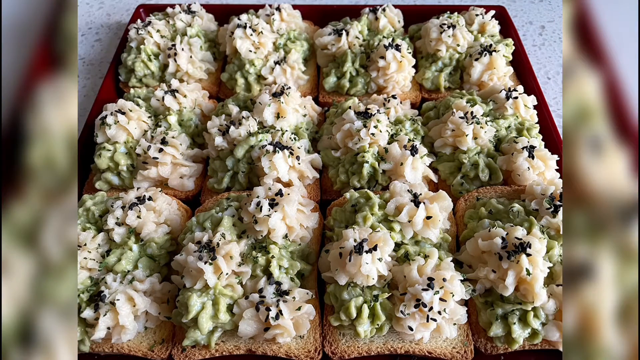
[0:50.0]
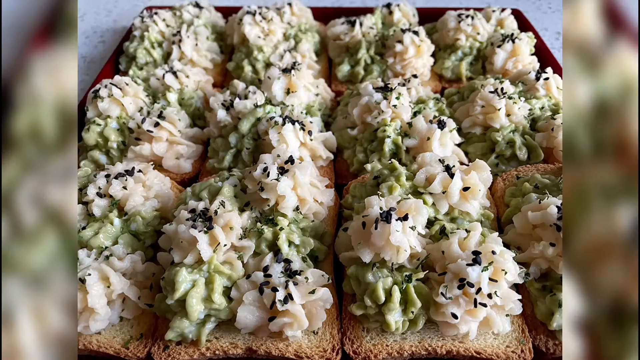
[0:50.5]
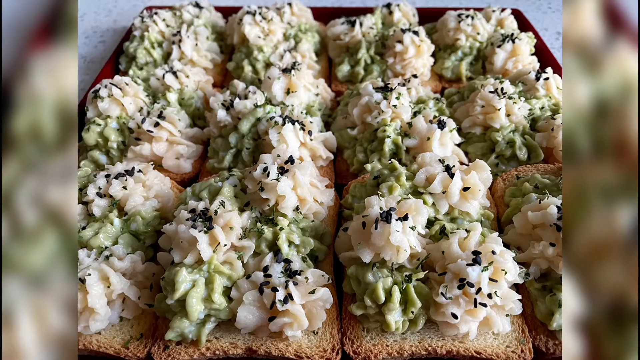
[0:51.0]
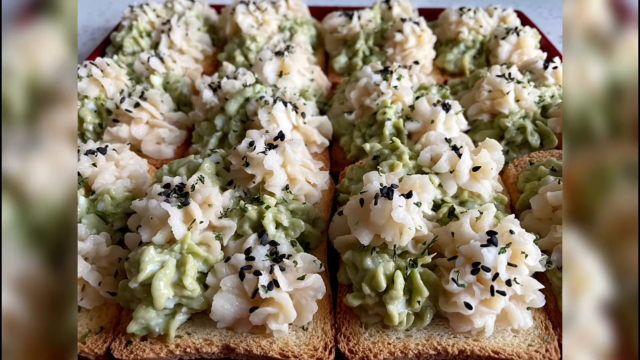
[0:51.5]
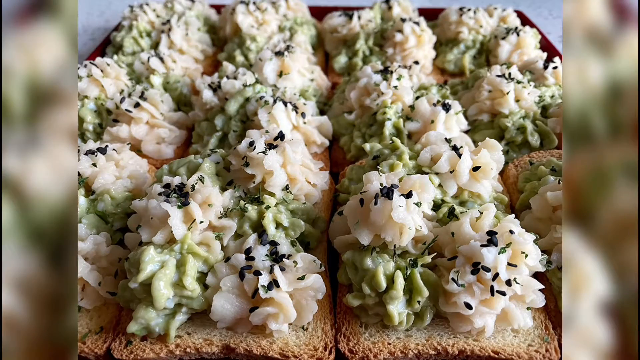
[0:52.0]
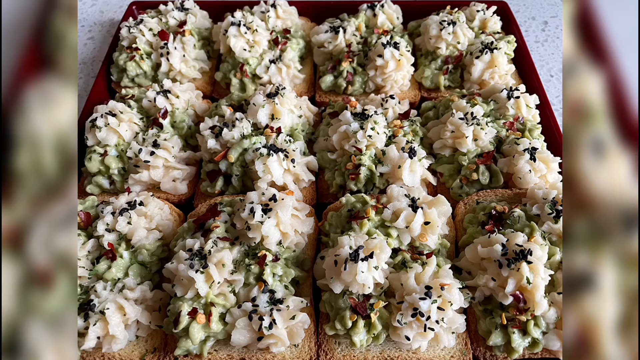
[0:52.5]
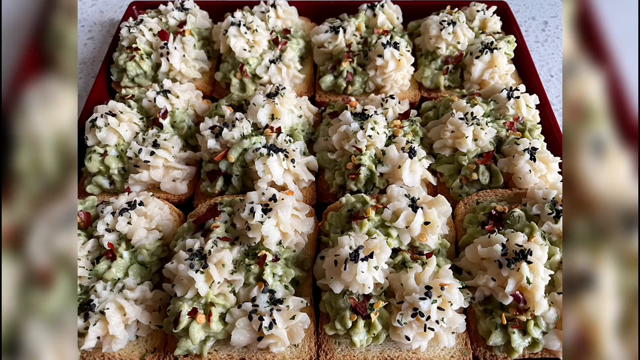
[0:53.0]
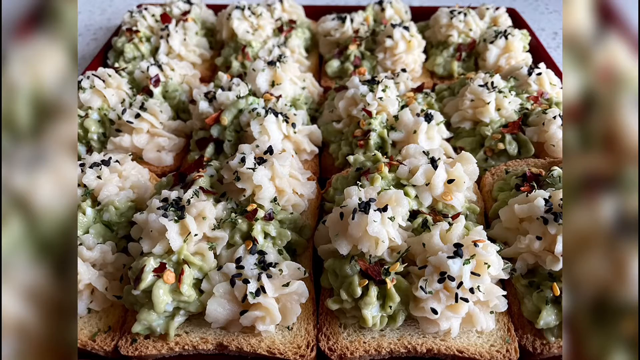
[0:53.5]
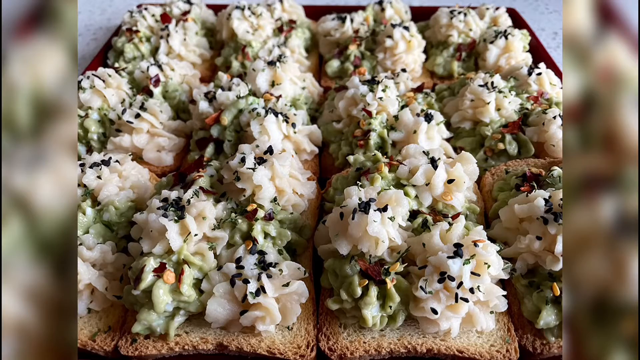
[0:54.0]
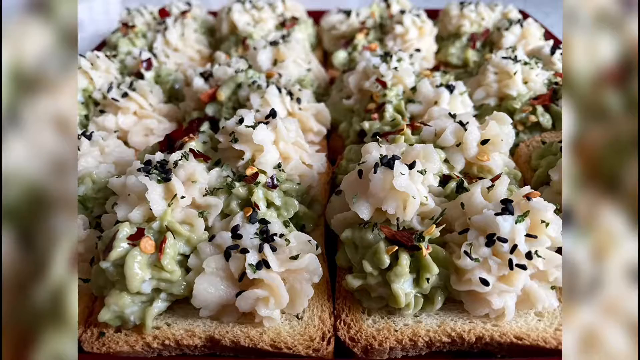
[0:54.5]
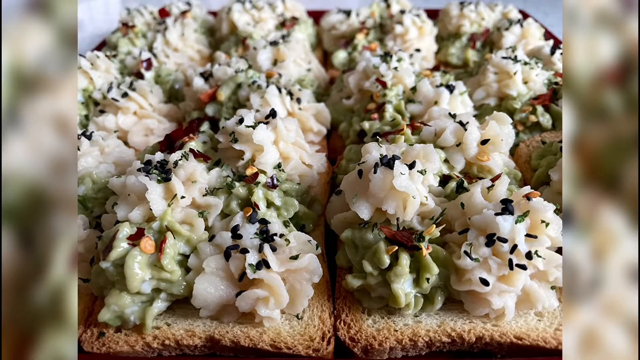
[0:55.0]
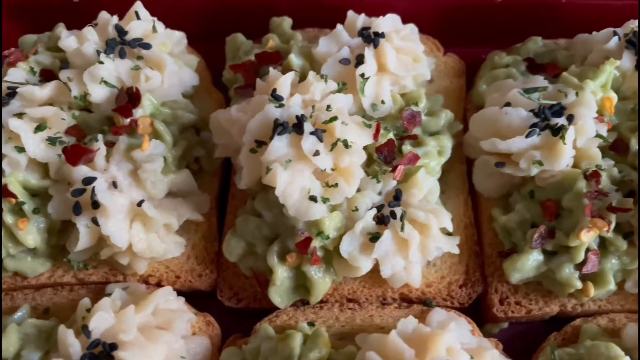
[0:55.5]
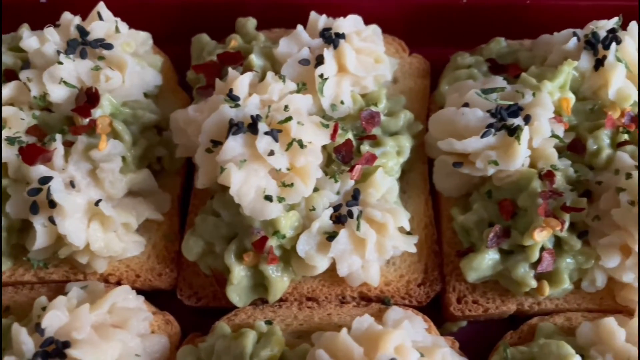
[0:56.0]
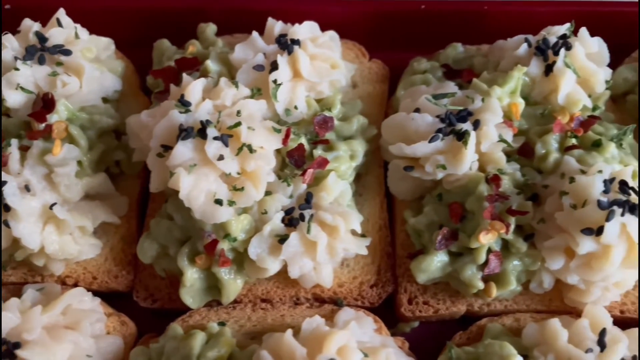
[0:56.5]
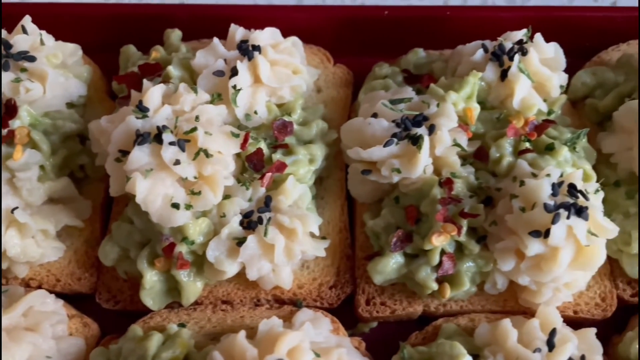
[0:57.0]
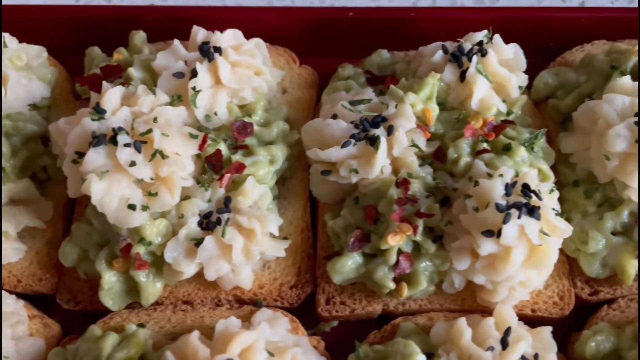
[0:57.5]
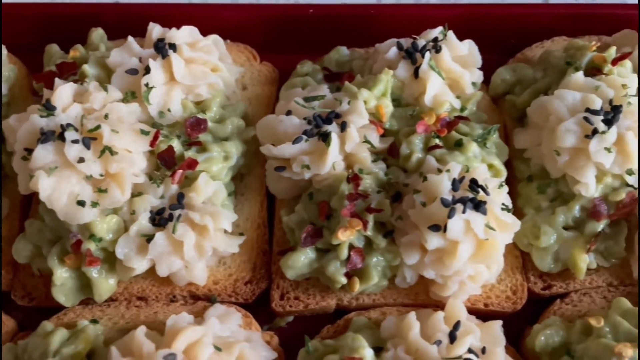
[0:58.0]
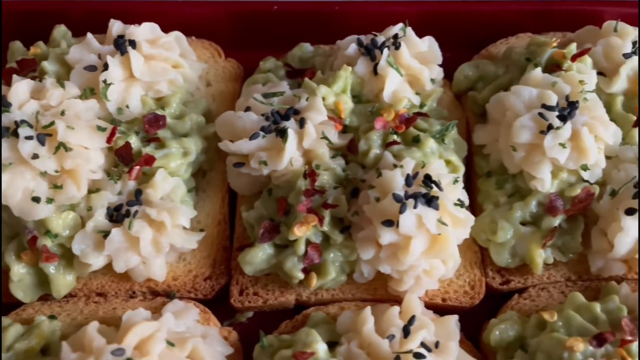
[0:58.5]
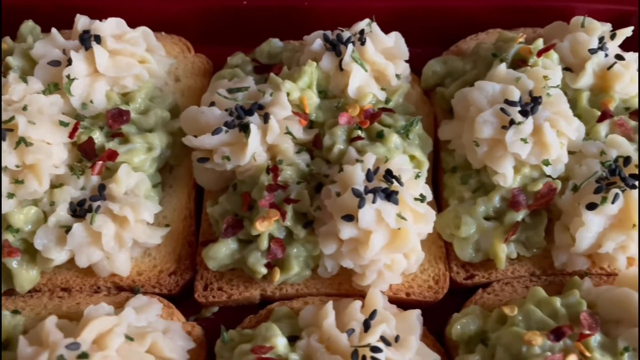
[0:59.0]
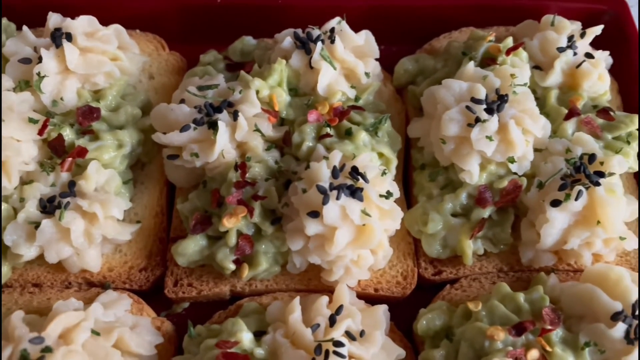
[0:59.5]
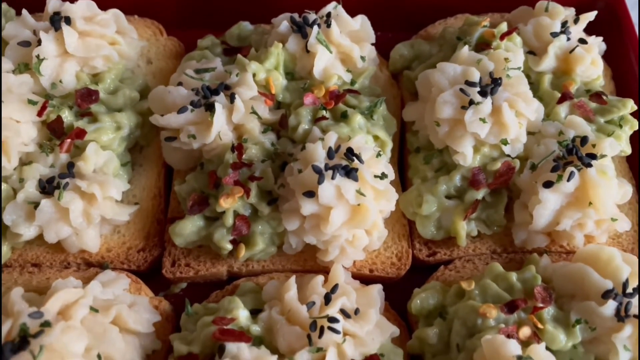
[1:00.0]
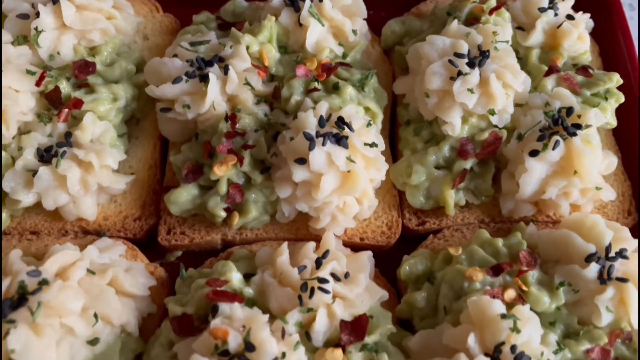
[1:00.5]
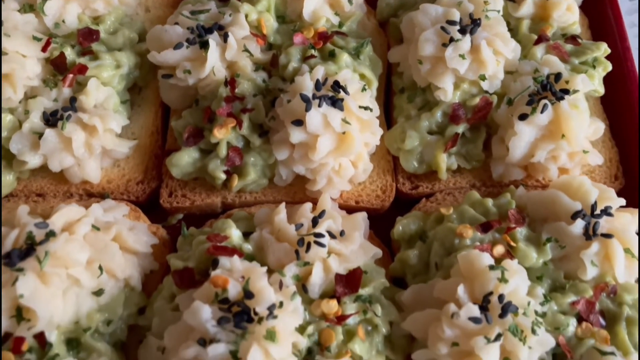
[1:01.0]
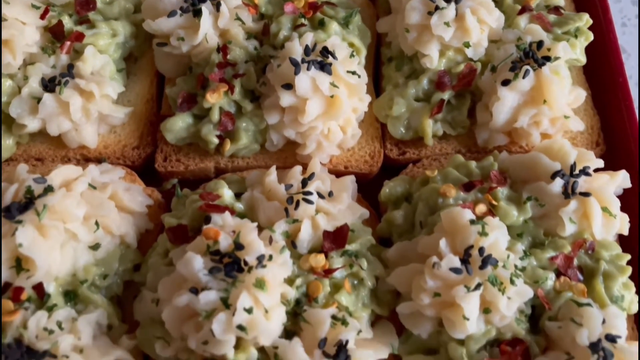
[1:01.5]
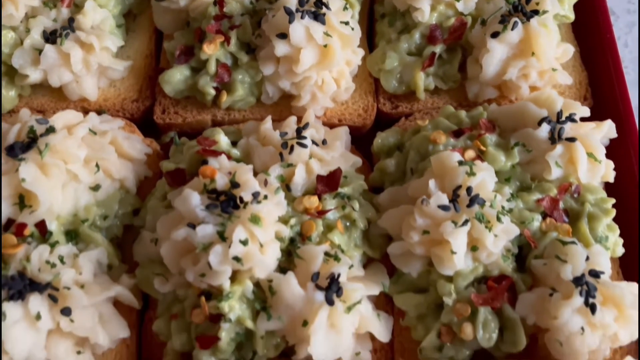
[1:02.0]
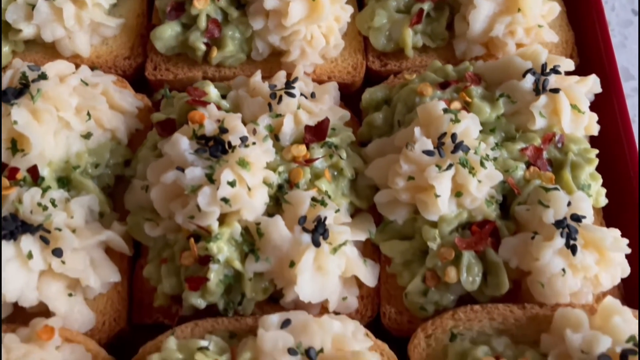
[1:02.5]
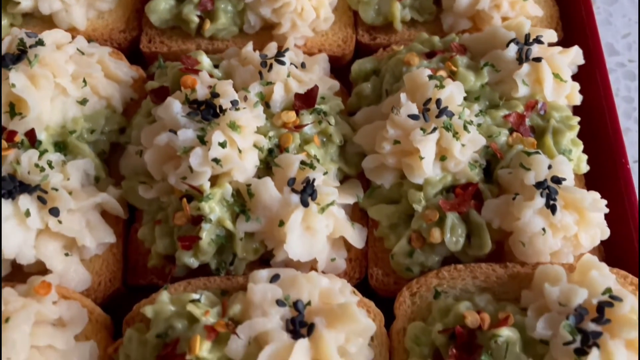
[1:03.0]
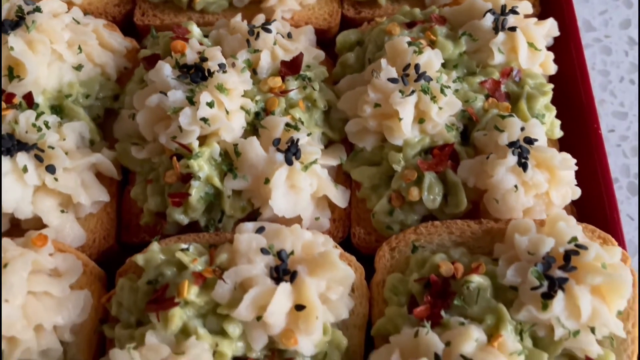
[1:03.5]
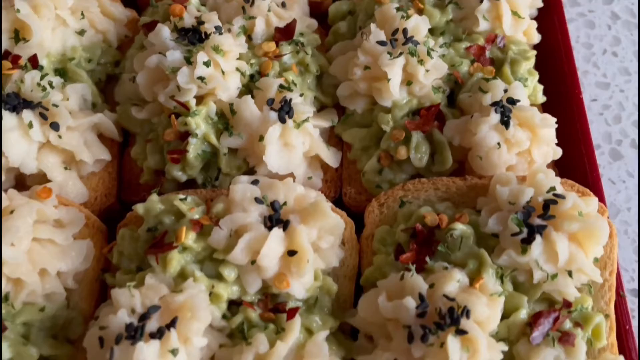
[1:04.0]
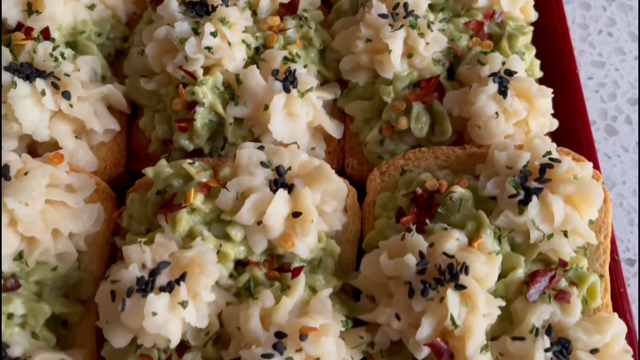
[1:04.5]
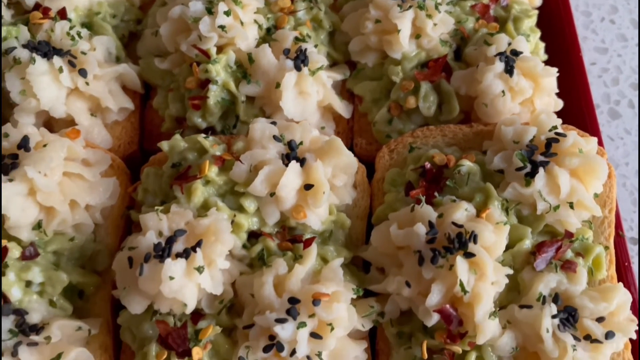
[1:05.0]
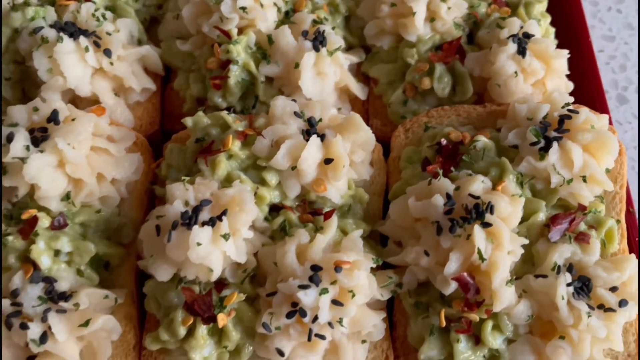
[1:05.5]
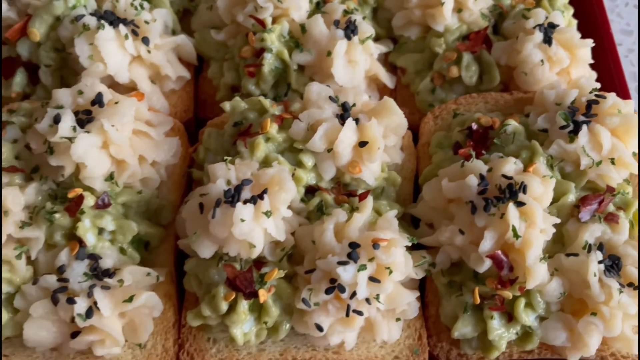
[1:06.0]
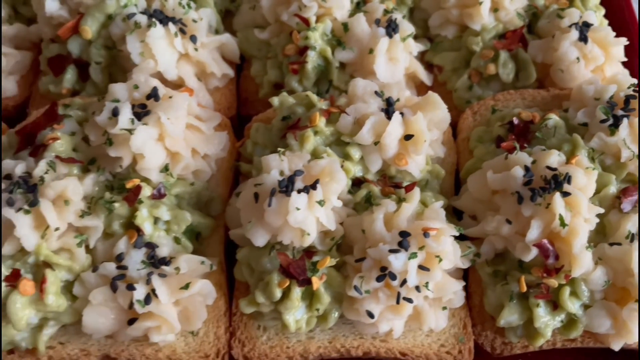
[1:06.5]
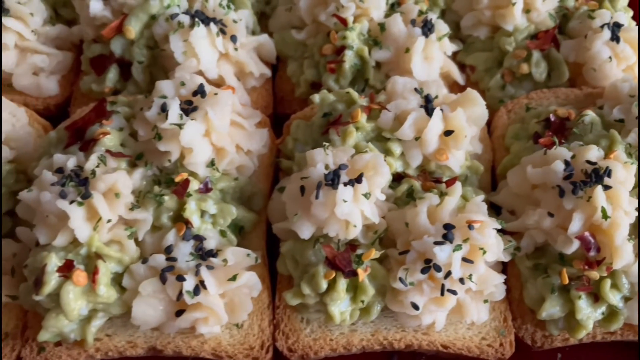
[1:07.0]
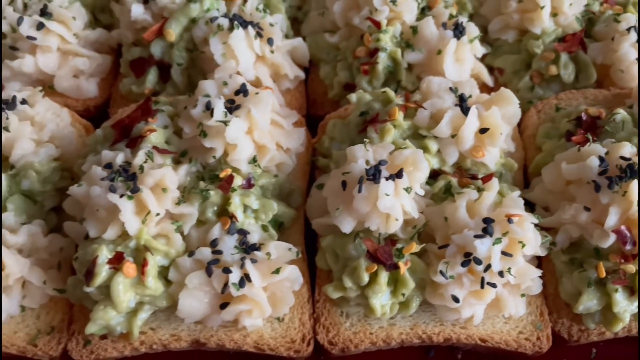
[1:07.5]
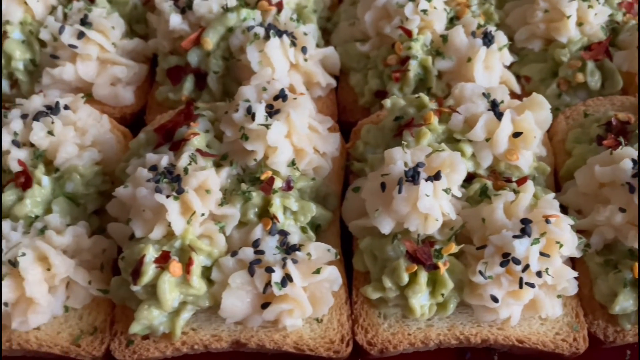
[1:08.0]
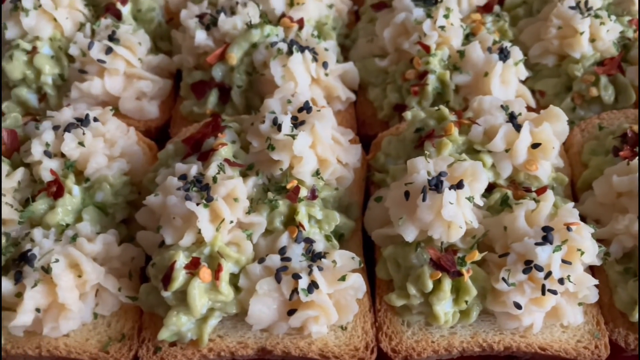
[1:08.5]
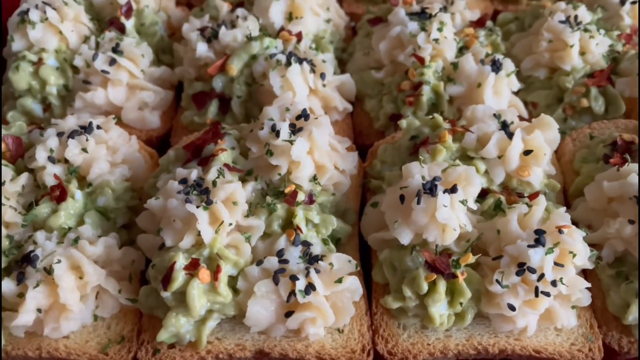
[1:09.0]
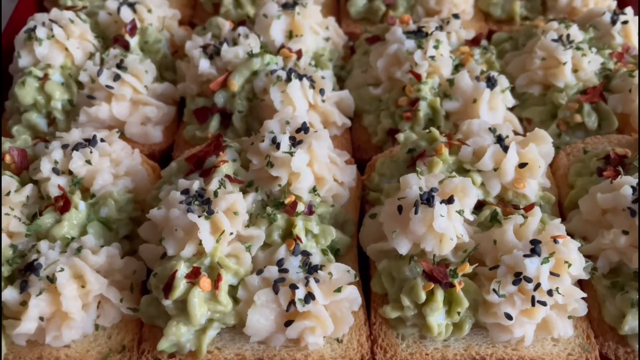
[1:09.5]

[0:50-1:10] Twelve pieces of bread covered in avocado and egg mixture and potato mixture, and sprinkled with a black substance that is likely pepper, are organized into three horizontal rows and four vertical columns in a red tray on a white tabletop or countertop. The shot moves progressively closer to the bread, then zooms out, then moves close again. Getting closer, what appear to be red peppers are sprinkled onto the bread. The top row of bread is shown and the camera pans right across it, then moves down a row and down again to the bottom row, panning left over the four pieces of bread in the bottom row of the red tray.